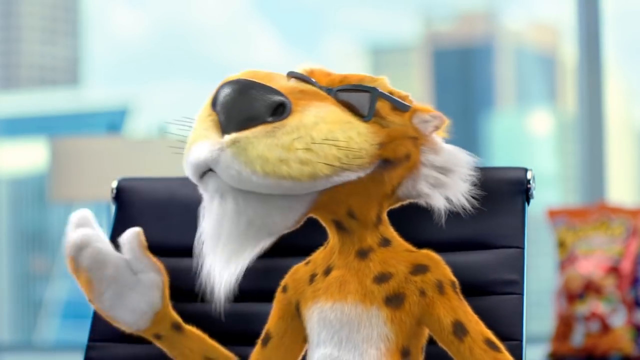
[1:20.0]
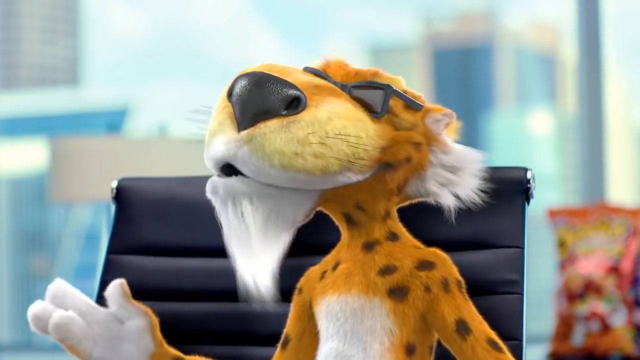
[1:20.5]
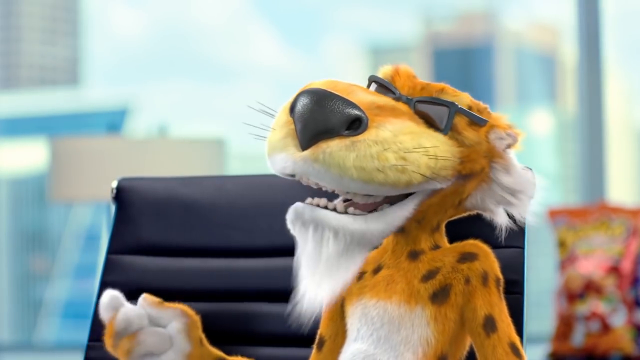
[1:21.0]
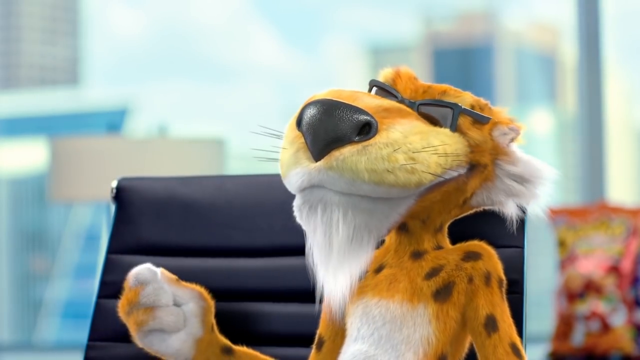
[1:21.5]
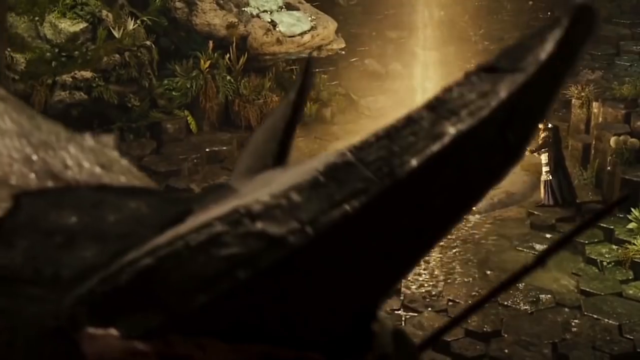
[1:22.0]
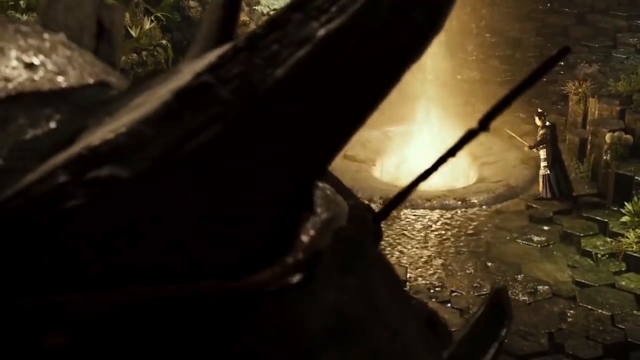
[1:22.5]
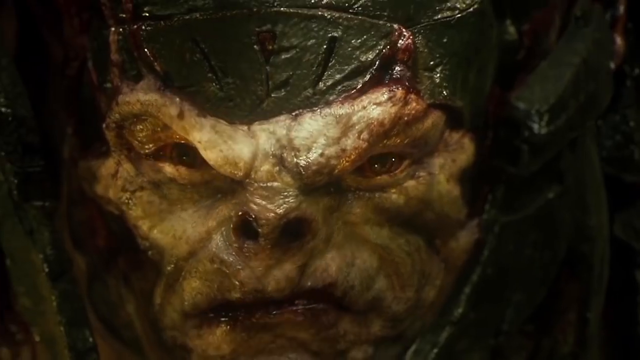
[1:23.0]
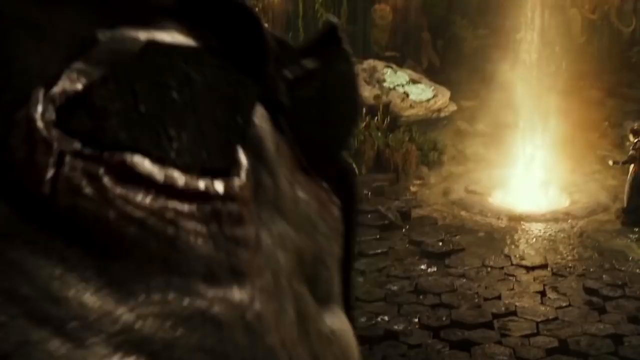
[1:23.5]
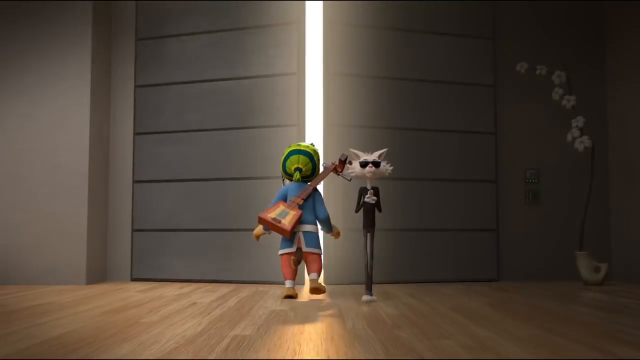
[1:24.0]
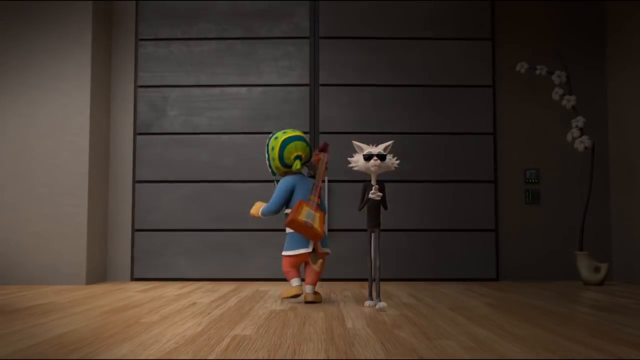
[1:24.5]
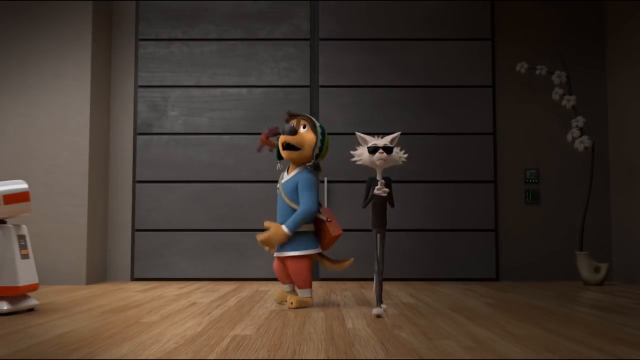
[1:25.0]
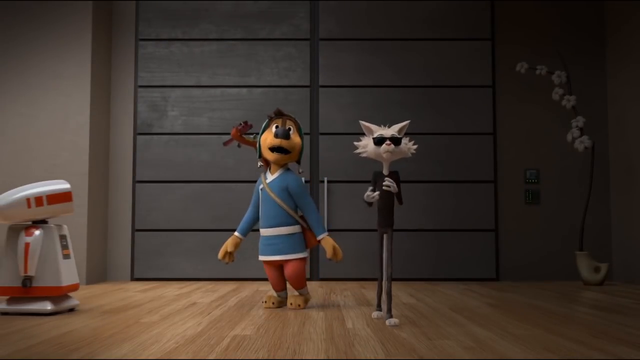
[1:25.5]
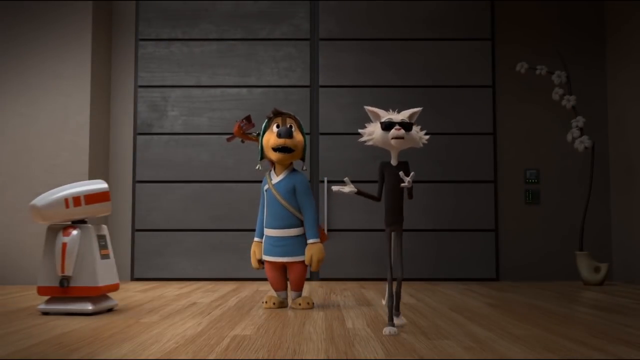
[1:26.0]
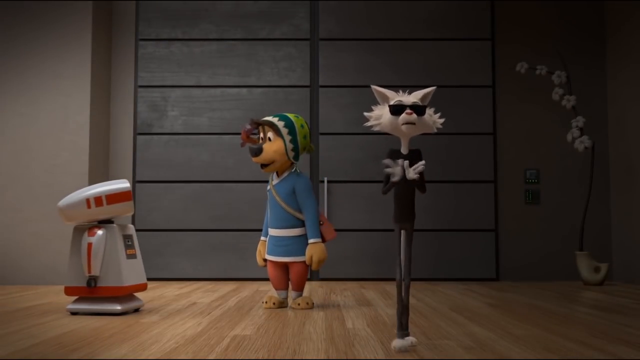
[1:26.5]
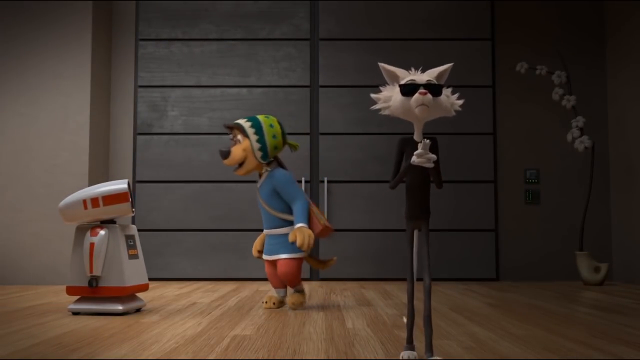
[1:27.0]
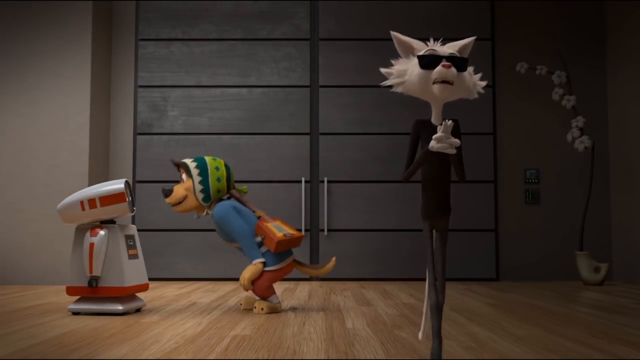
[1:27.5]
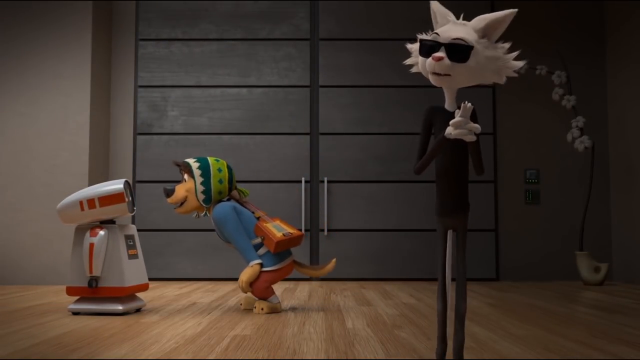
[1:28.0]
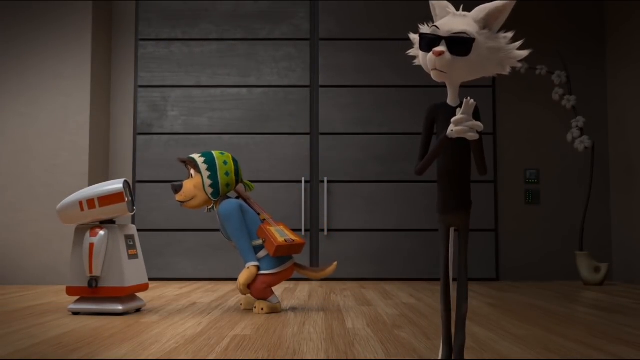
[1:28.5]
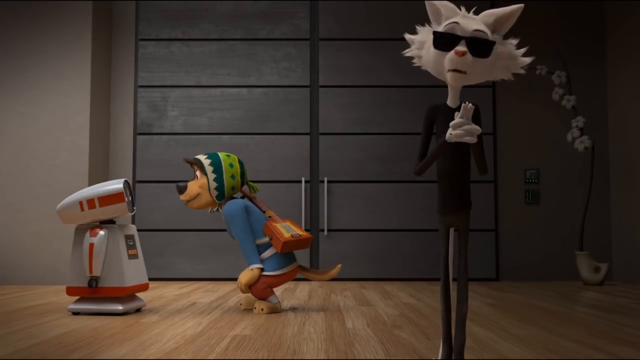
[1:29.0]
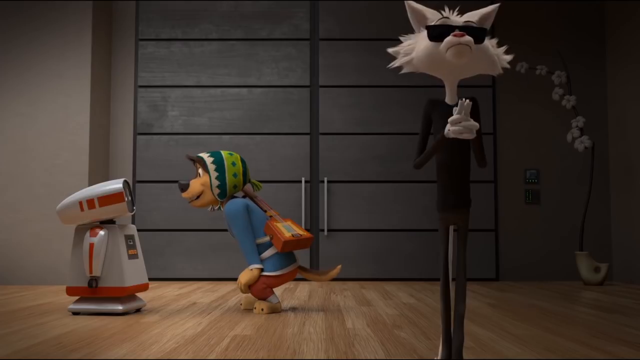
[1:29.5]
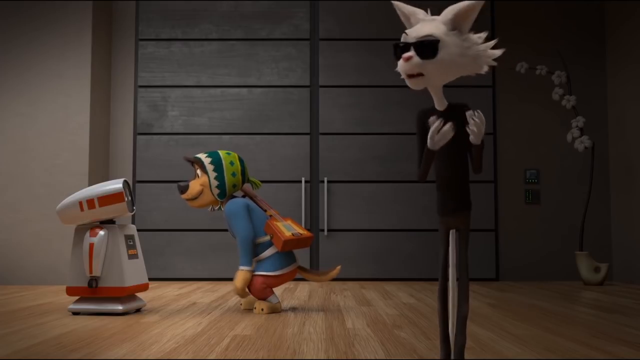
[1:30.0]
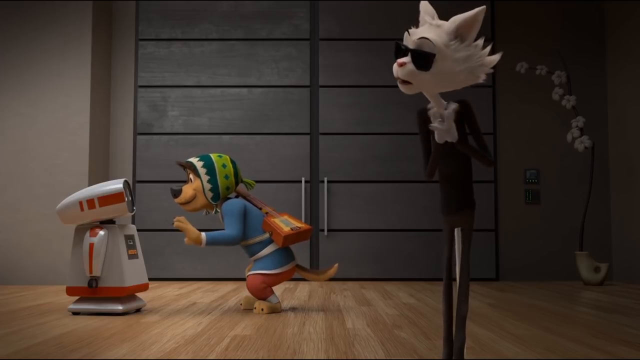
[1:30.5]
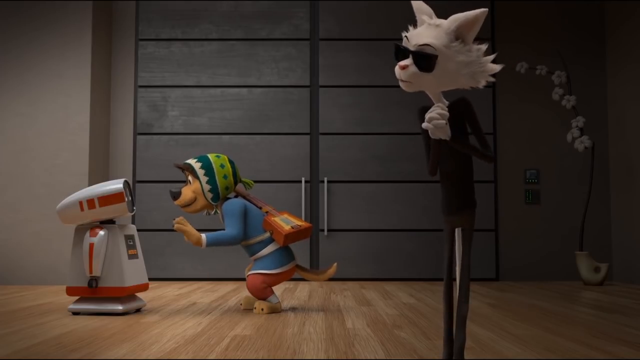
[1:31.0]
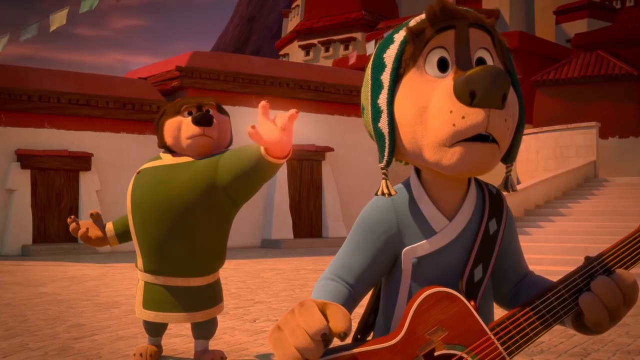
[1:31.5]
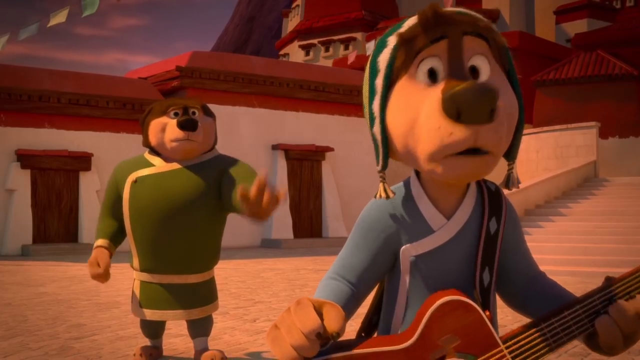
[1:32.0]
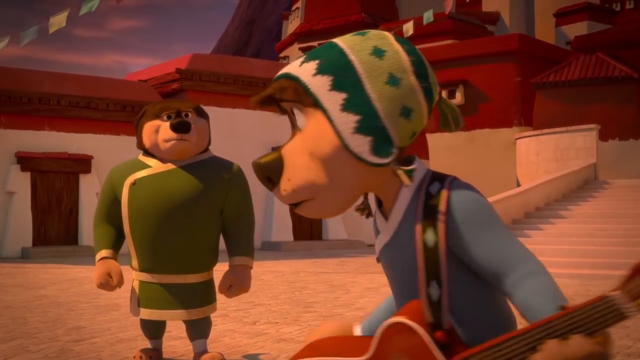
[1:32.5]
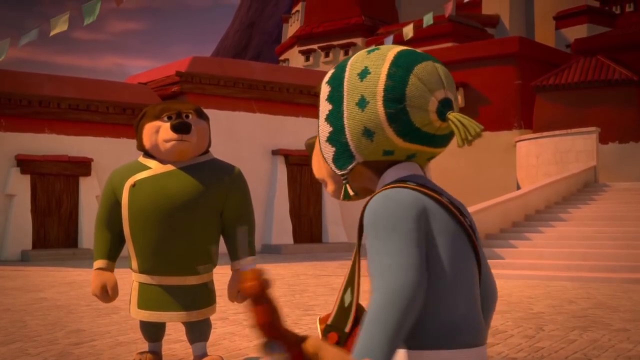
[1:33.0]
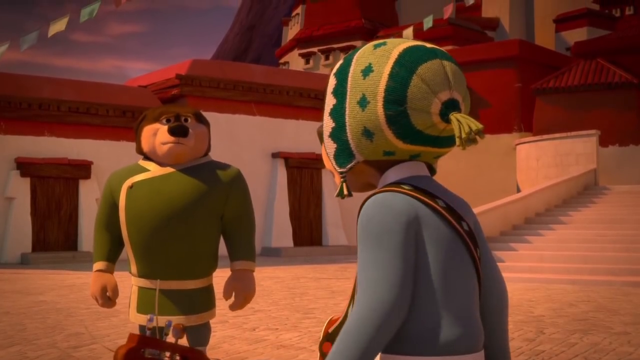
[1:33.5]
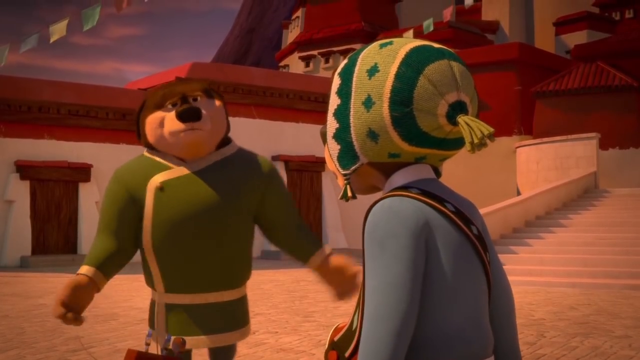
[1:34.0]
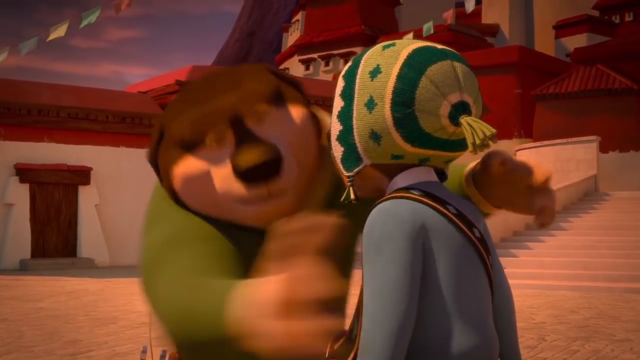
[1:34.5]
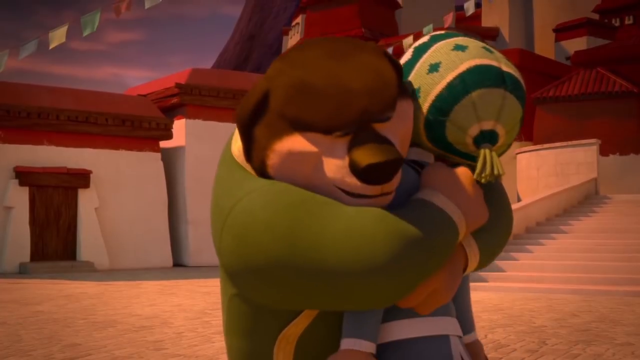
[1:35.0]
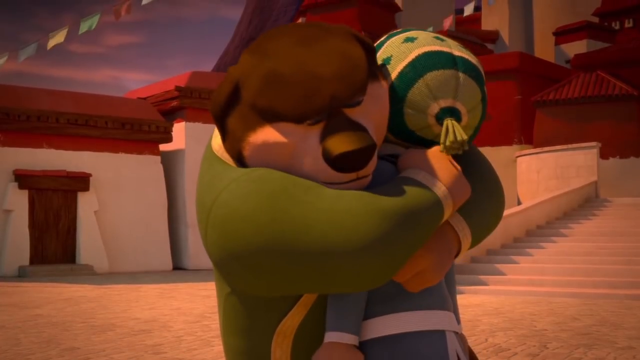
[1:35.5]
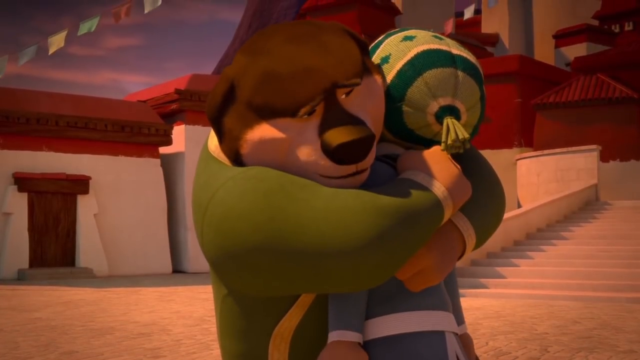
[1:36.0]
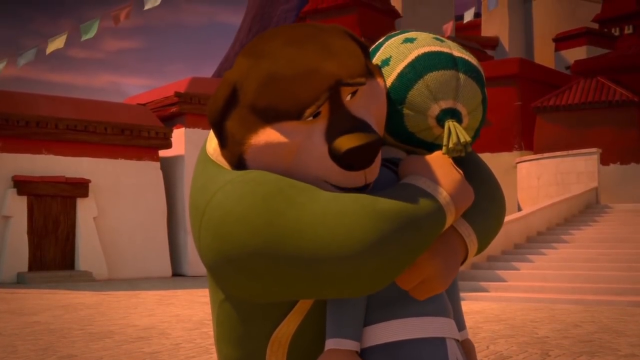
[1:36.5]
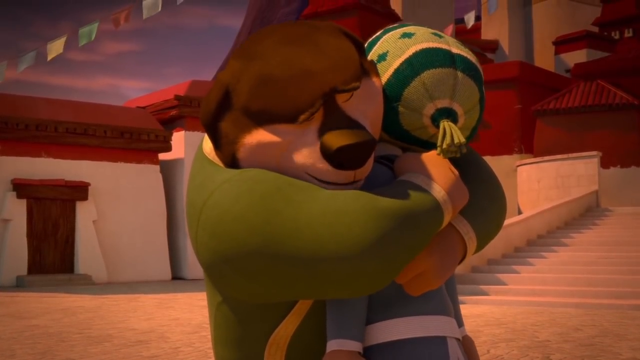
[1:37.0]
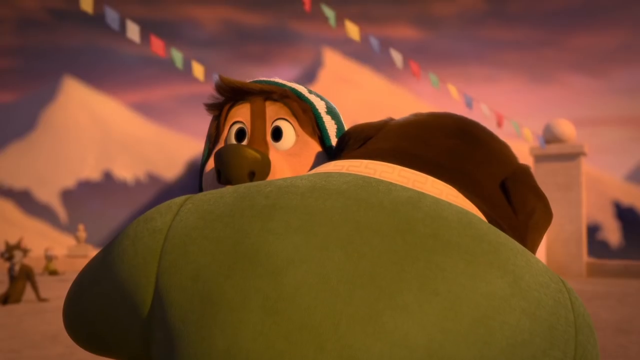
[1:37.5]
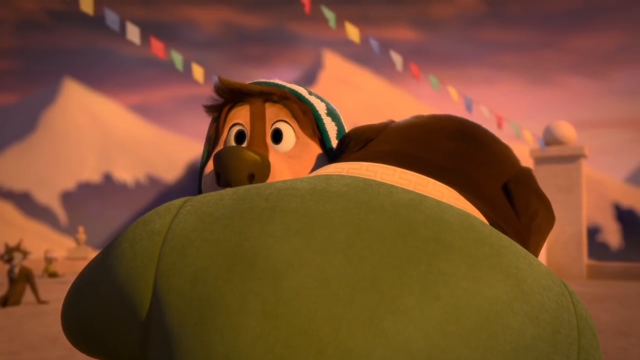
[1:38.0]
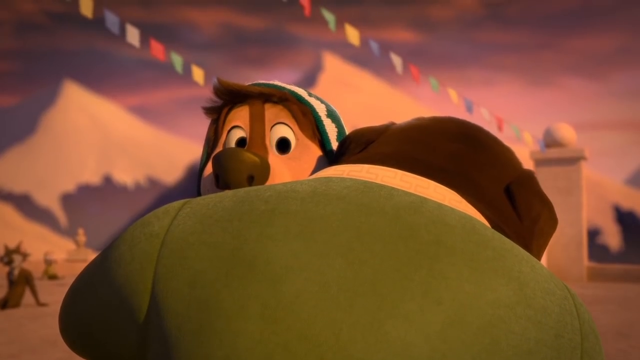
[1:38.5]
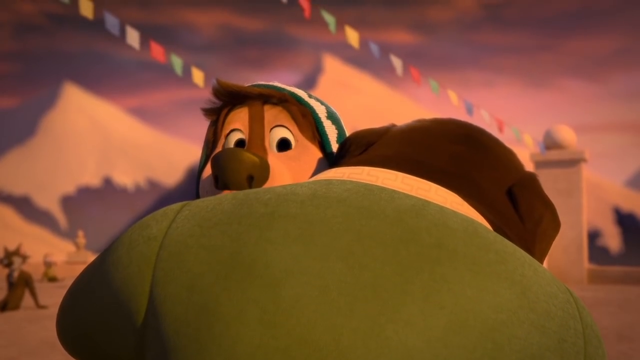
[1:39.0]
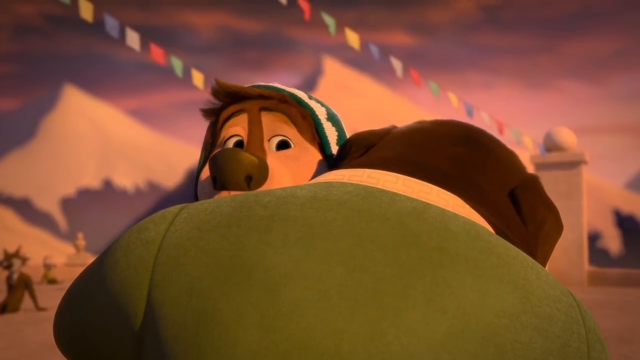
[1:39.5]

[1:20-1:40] A leopard with a long goatee sits in a leather chair wearing fancy sunglasses, his hair blown back in the breeze, with a big smile on his face. The scene changes to what looks like a monster from Lord of the Rings, apparently about to kill everybody; he takes off running. The scene changes again to the sleek cat manager in dark glasses and a sleek black outfit walking weirdly through a large door into a mansion, with the singer dog he represents to his right. The dog appears overwhelmed by the size of the mansion, and little robots running around easily distract him. The scene then changes to a bigger dog running up, possibly the dog's father.